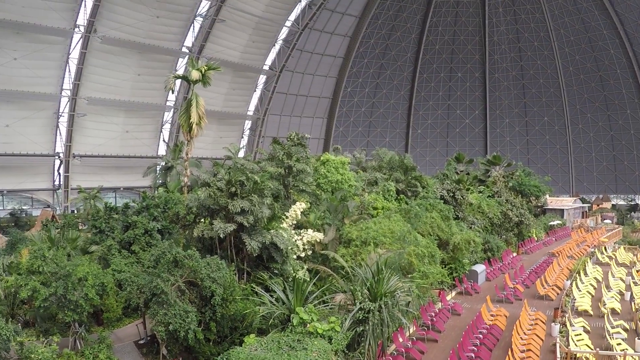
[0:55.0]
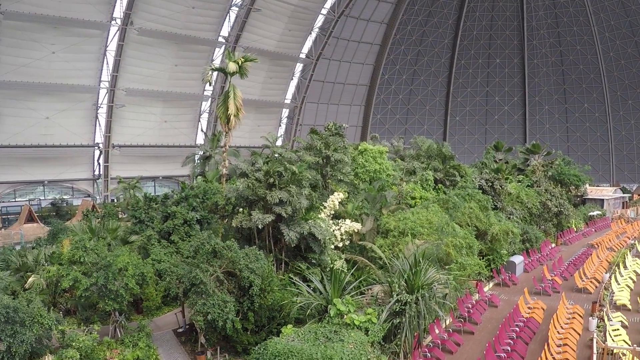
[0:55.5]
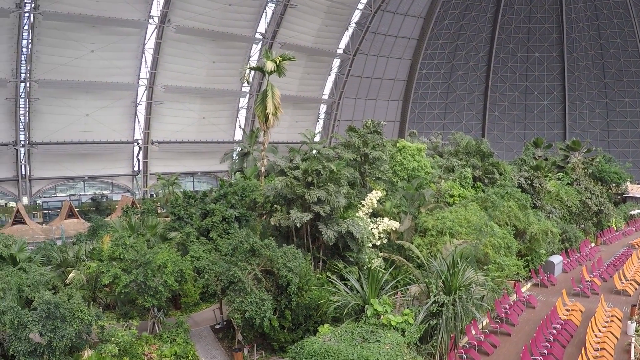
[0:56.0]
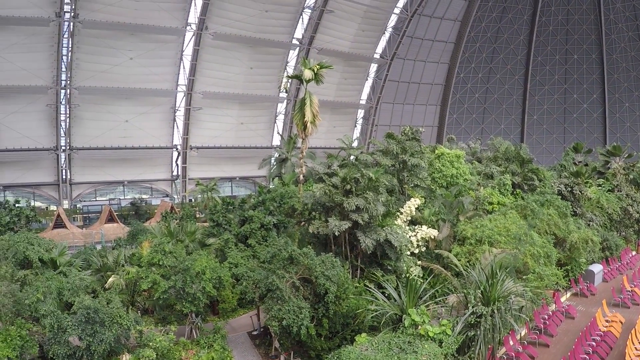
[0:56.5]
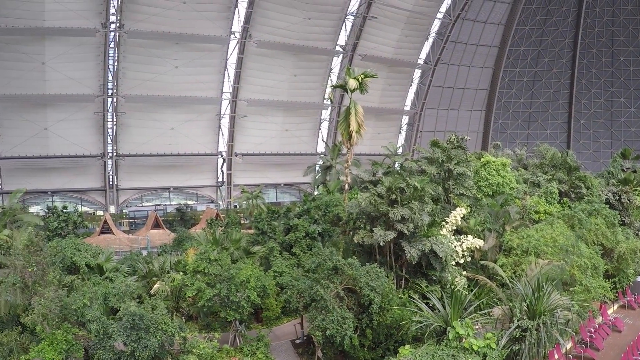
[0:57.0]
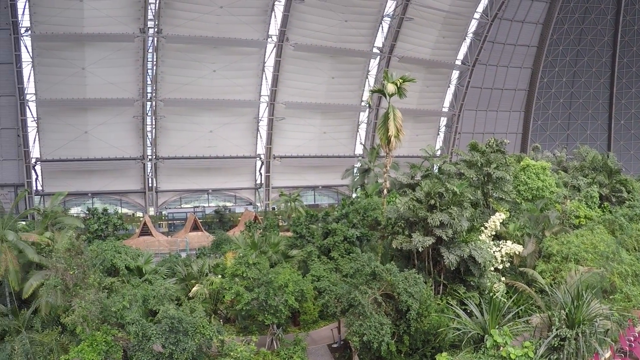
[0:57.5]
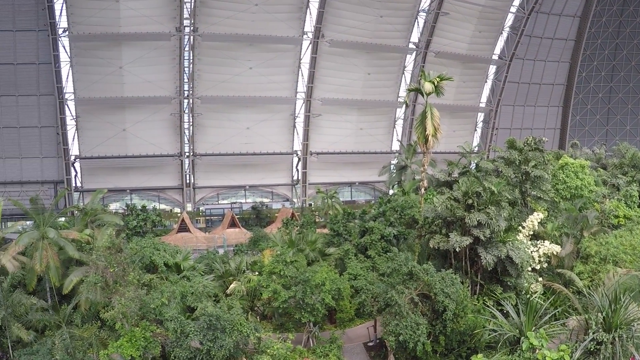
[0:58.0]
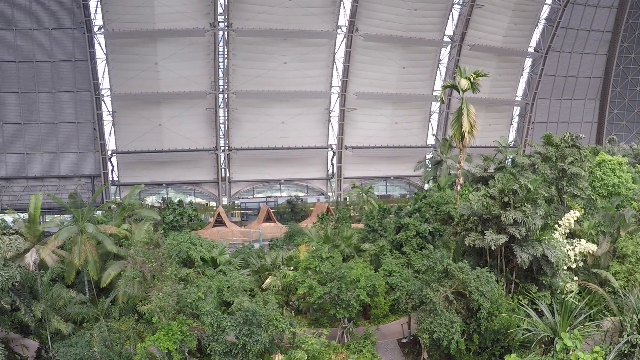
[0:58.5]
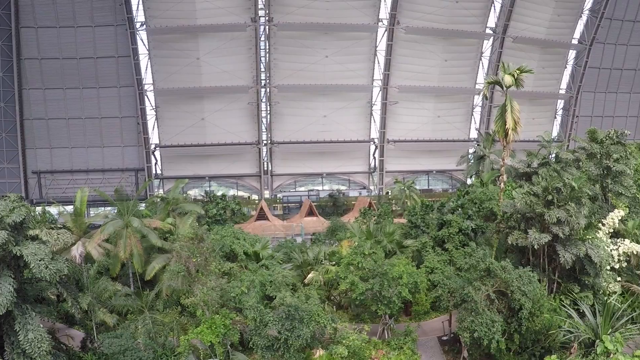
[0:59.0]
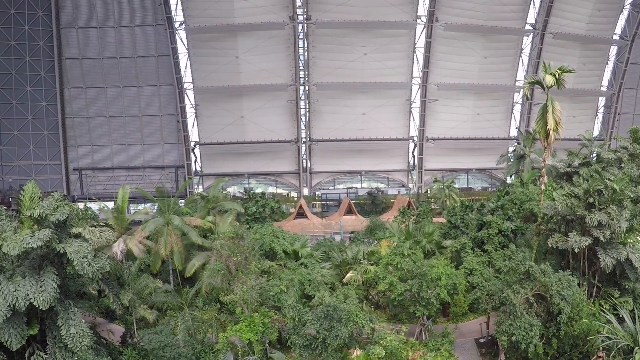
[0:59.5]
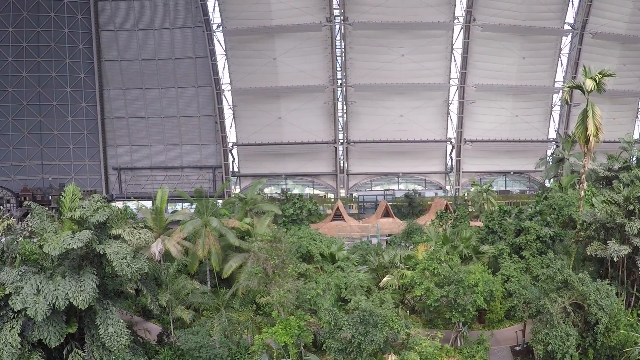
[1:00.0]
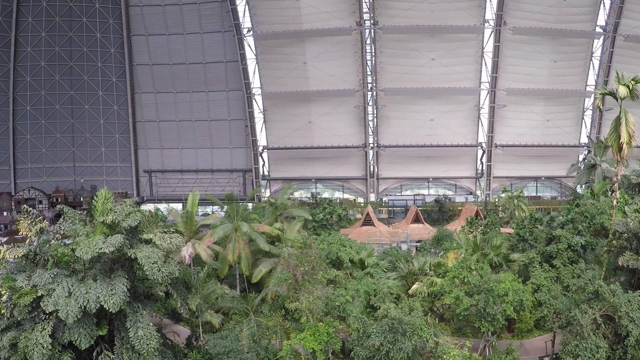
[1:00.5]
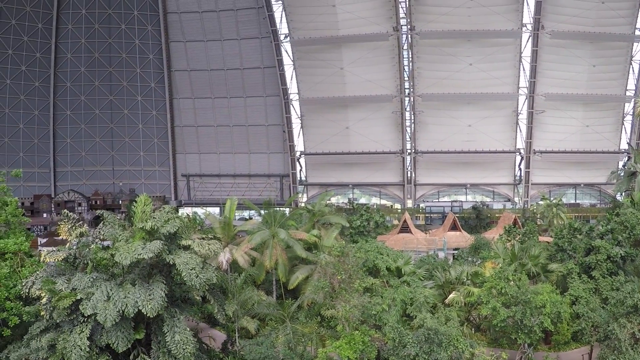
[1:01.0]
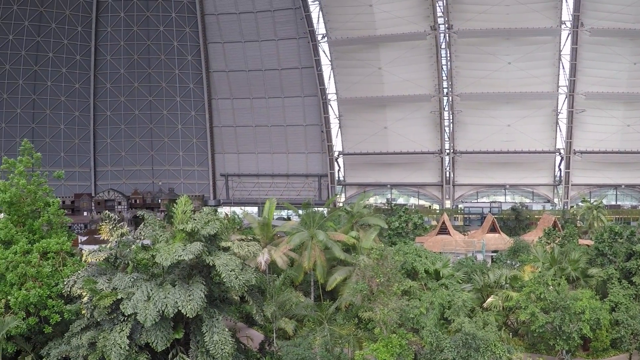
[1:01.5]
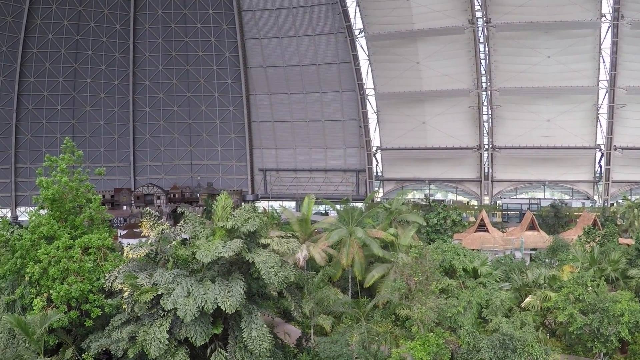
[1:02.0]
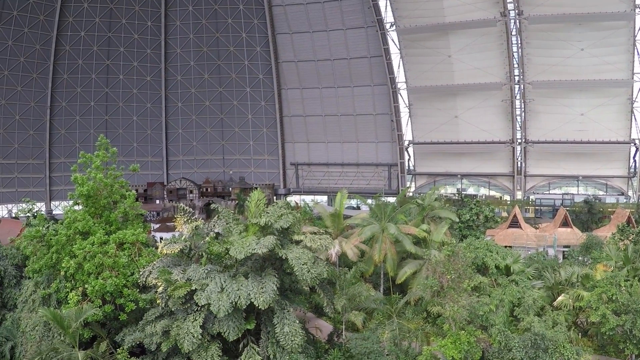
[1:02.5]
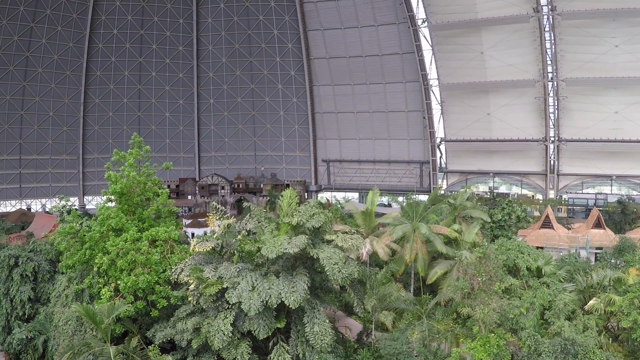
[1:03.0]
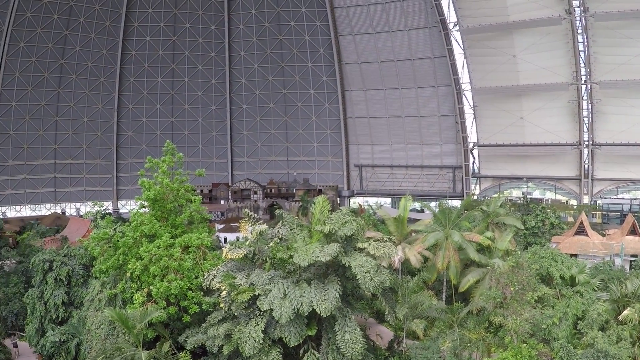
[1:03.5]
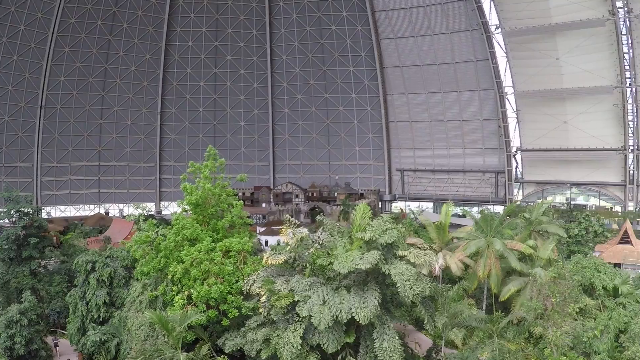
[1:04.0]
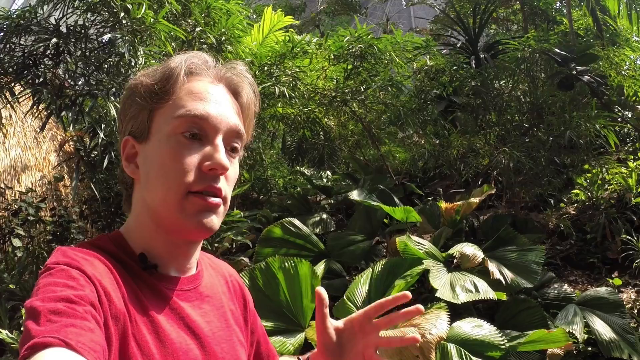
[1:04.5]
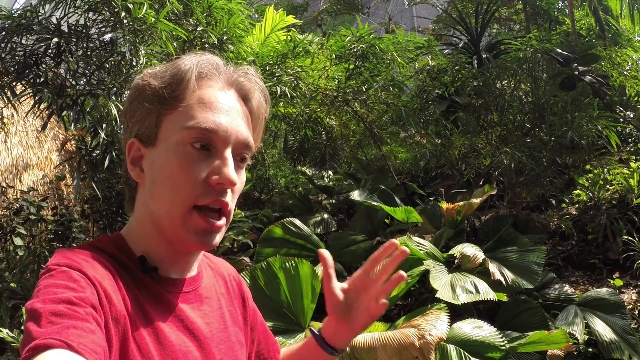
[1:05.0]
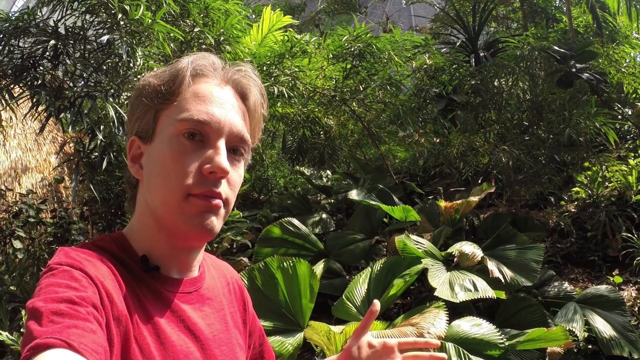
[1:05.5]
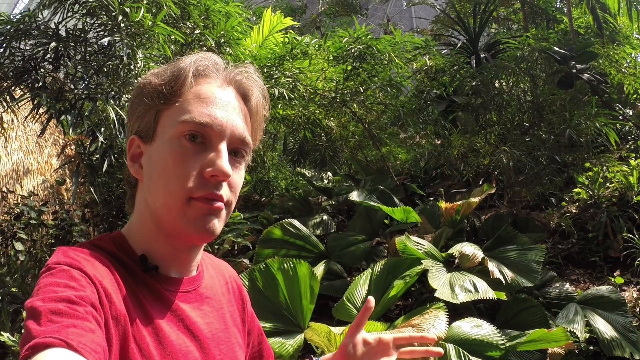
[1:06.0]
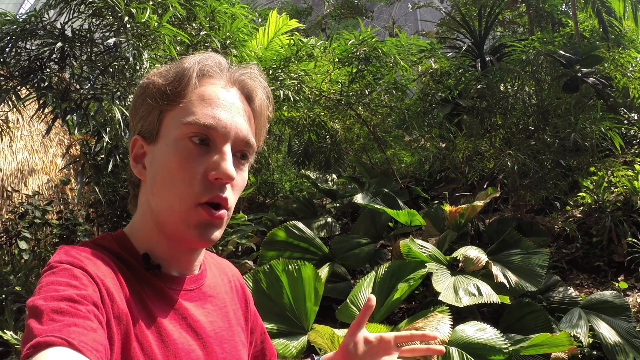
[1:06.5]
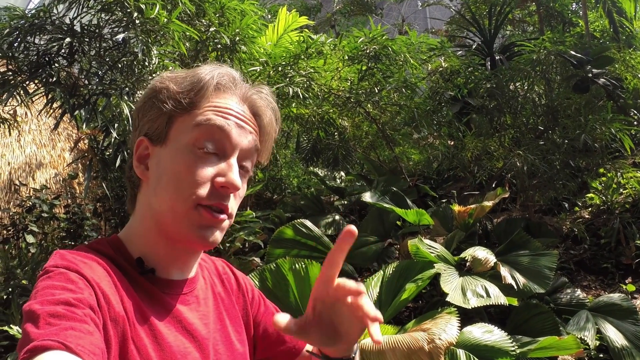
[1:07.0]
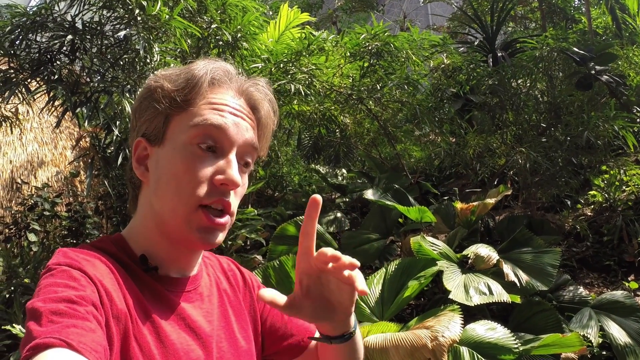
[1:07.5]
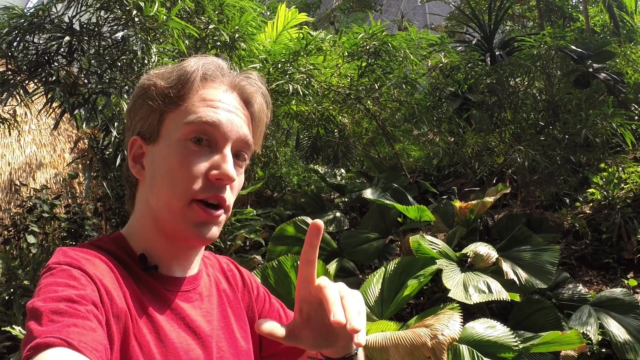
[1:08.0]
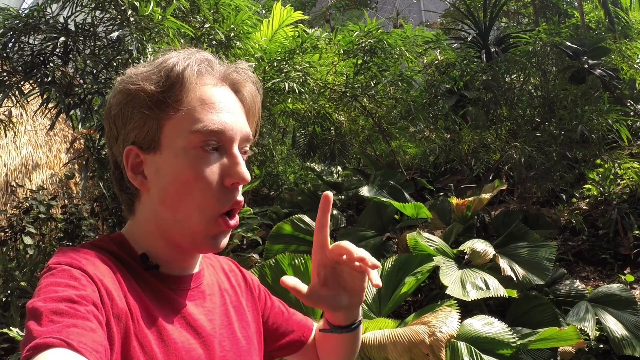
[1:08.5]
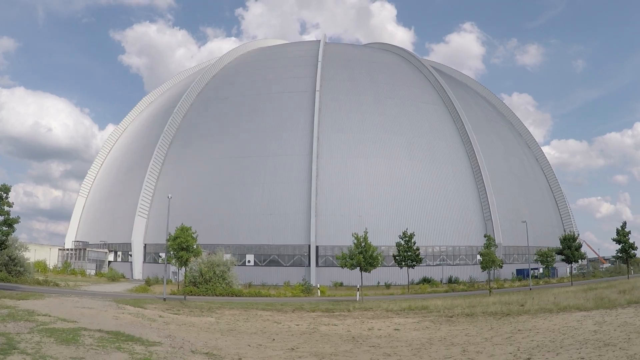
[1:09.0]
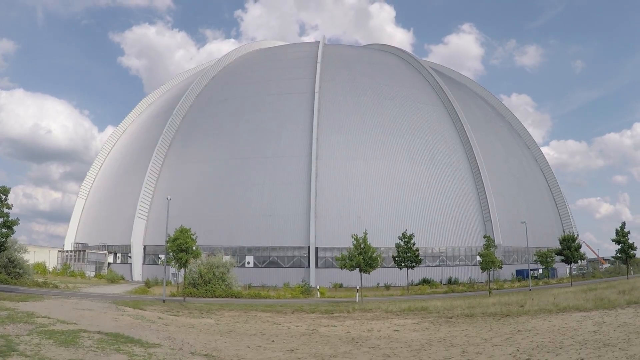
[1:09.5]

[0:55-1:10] The silver dome has silver struts up the sides and windows near the bottom, with many green trees and plants, some with white blooms. A taller palm tree is in the back next to the sidewall of the dome, and the view looks over many more plants, trees and rooftops. A man with light brown hair in a red t-shirt talks to the camera, standing in the sunlight, with lush greenery filling the space behind him. The outside of the resort is then shown: a huge, very tall, circular dome, white on the outside, with trees around the bottom, next to a roadway, under a light blue sky with white, fluffy clouds. Back inside the dome, the view shows the lush green trees and the side of the dome, with some orange chairs in the lower left corner and some pink chairs set out for people behind them.